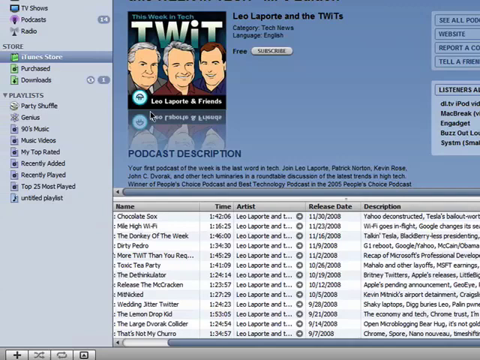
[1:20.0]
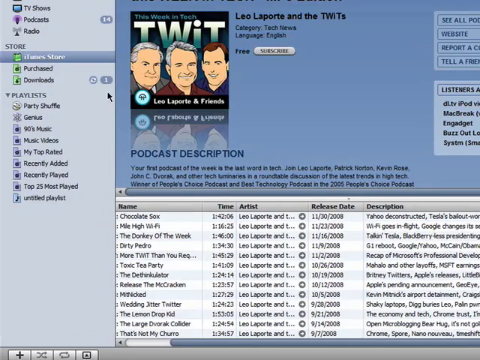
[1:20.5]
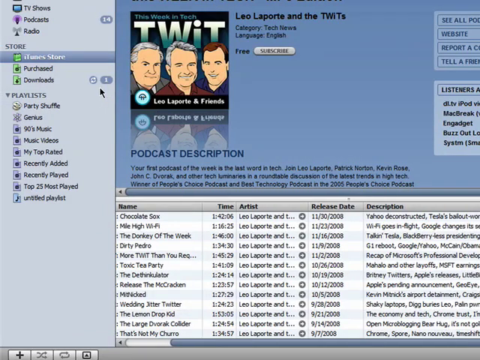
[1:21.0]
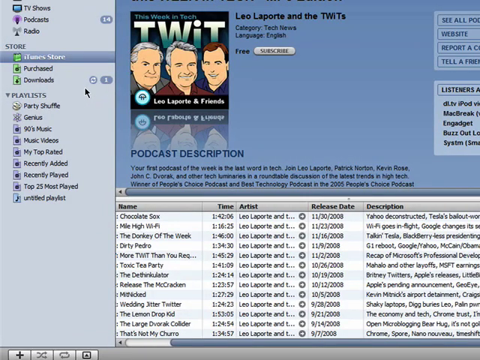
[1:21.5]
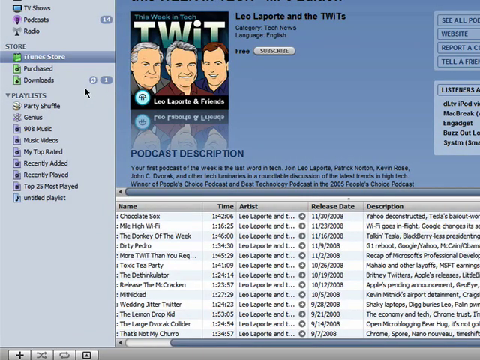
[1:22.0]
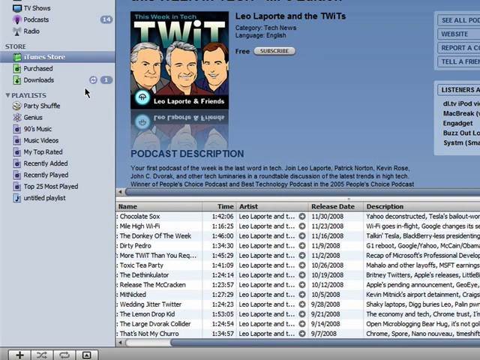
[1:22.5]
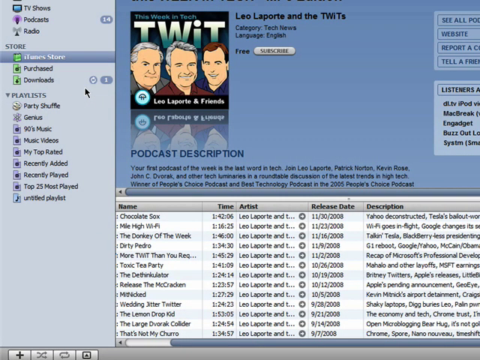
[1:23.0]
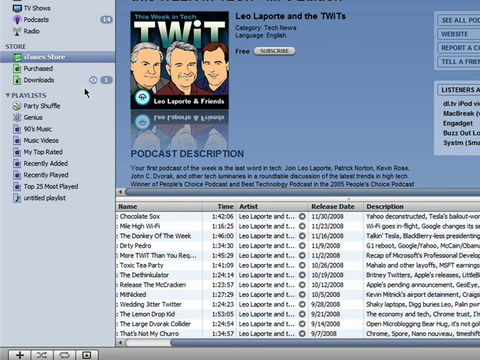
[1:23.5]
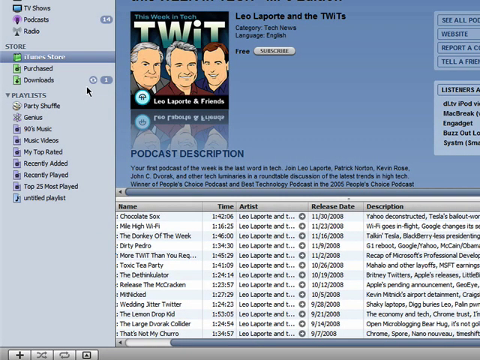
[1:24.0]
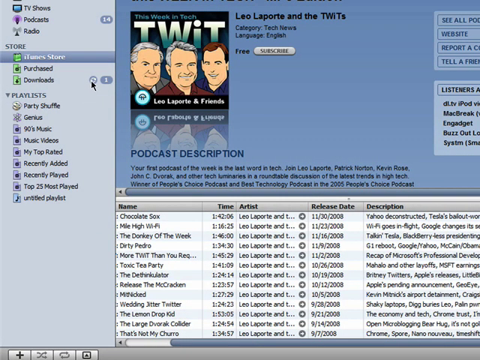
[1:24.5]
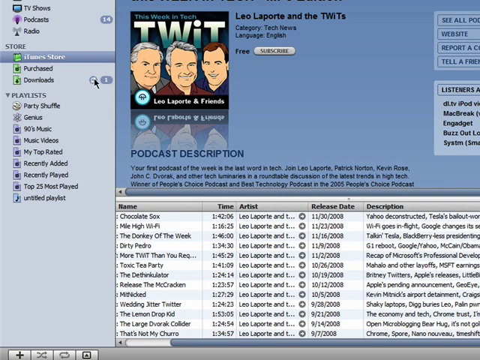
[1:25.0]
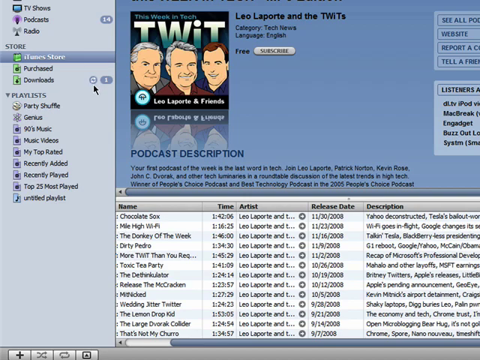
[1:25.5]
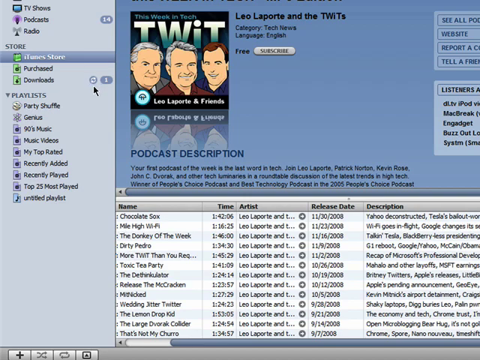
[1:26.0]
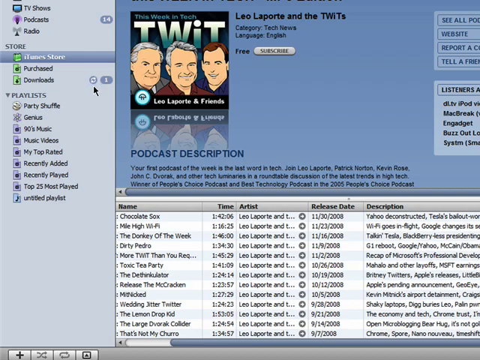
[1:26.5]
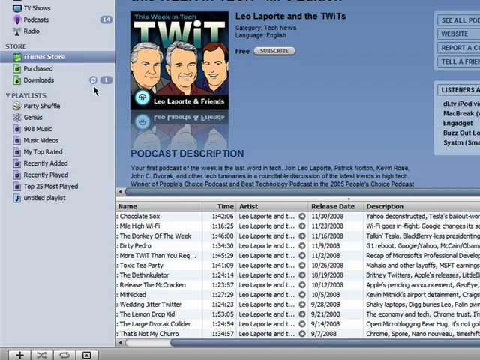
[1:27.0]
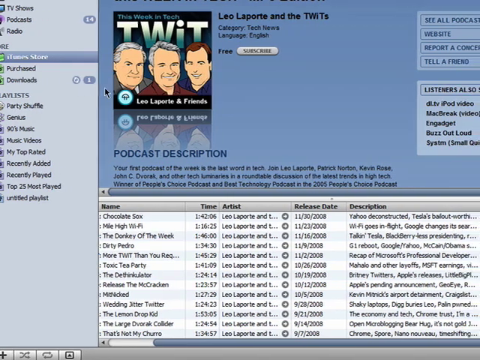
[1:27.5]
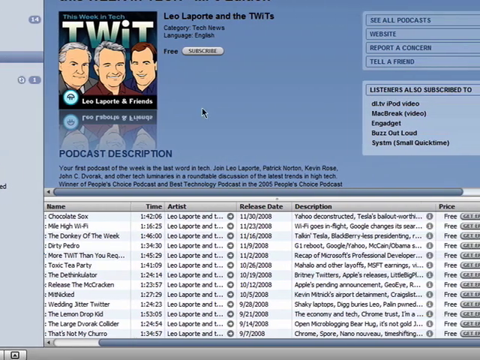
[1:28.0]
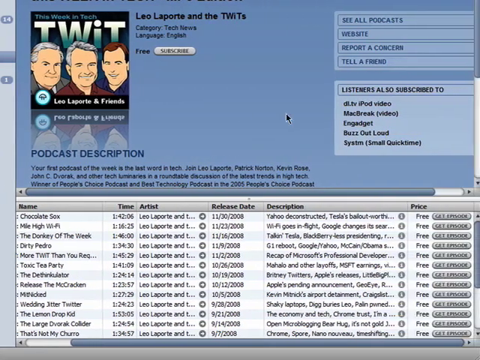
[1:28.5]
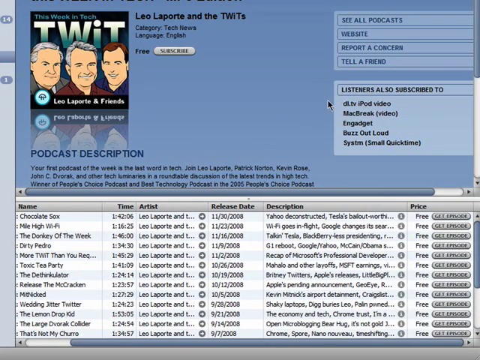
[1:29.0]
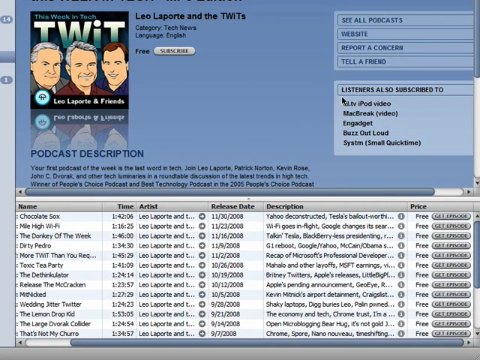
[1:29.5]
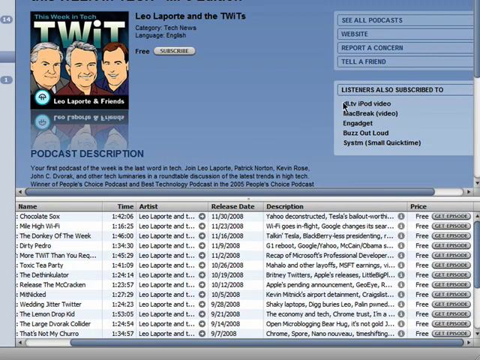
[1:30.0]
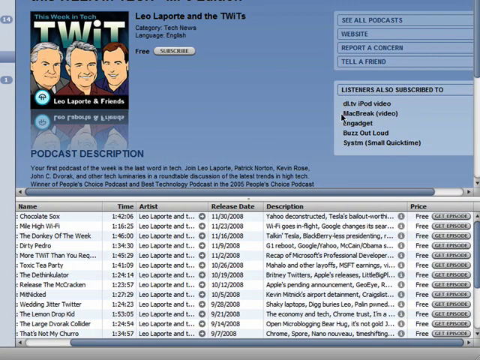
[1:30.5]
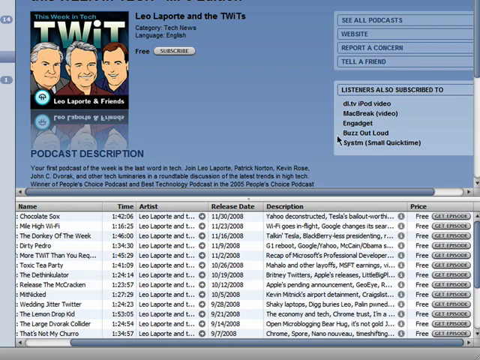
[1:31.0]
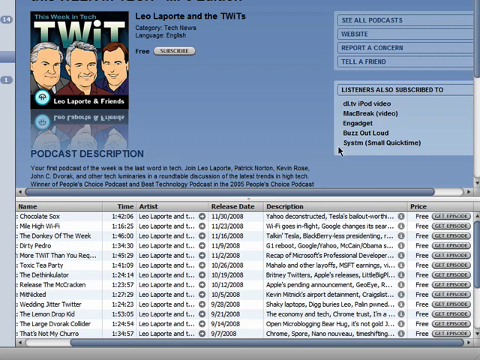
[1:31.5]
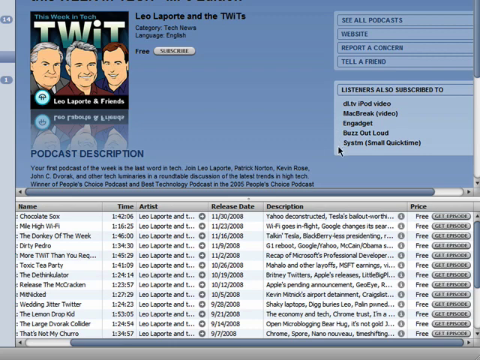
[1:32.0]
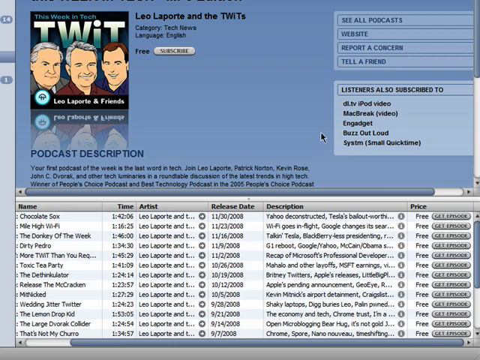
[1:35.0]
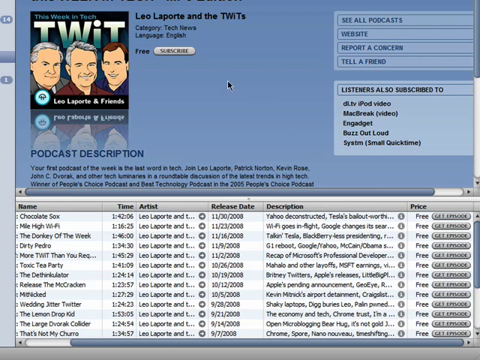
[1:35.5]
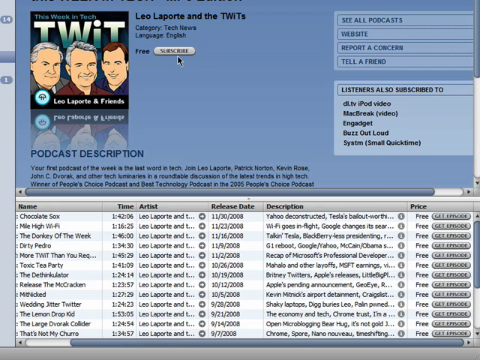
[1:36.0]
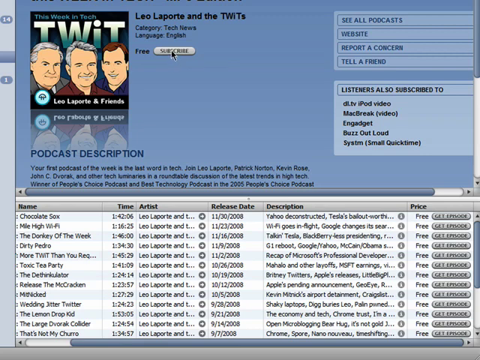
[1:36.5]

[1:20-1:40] The page for the TWIT podcast remains open, with its cartoon-style image of two men with gray hair and one man with brown hair. It says it features Leo Laporte and friends, and at the top it lists the category as tech news and the language as English. A description reads: "your first podcast of the week is the last word in tech. Join Leo Laporte, Patrick Norton, Kevin Rose, and others for roundtable discussion of the latest trends in high tech." On the left side of the screen is still a menu, which now shows a playlist section. Underneath playlist are party shuffle, German, 90s music, music videos, my top rated, recently added, recently played, top 25 most played, and another playlist at the bottom.